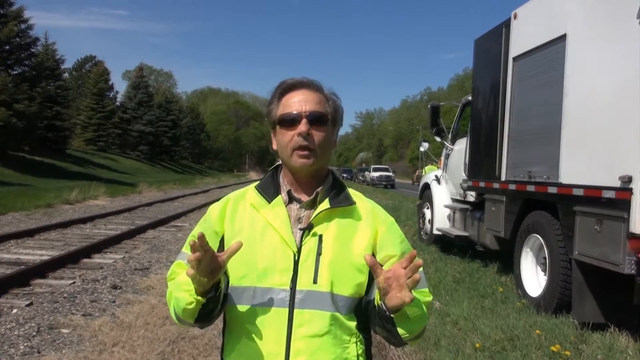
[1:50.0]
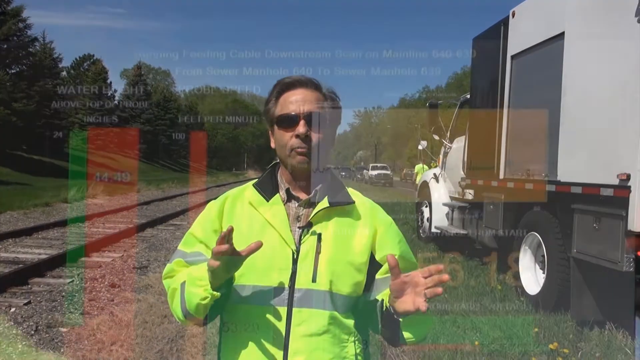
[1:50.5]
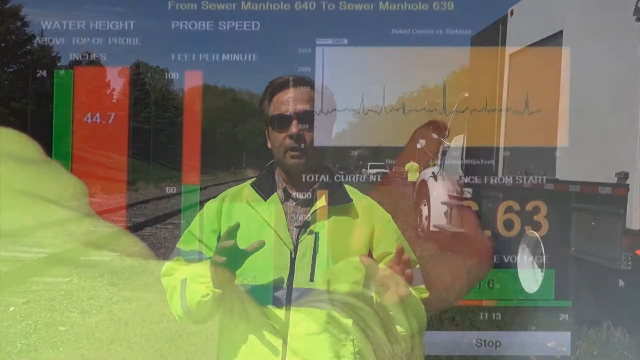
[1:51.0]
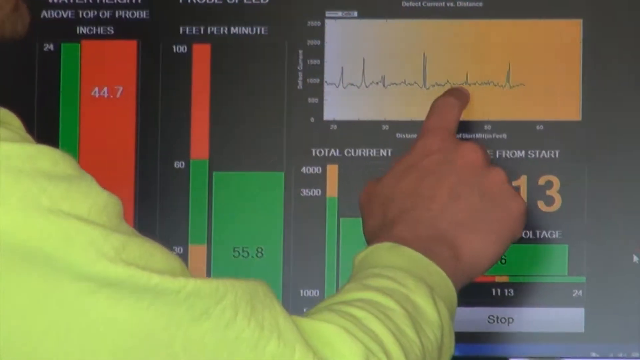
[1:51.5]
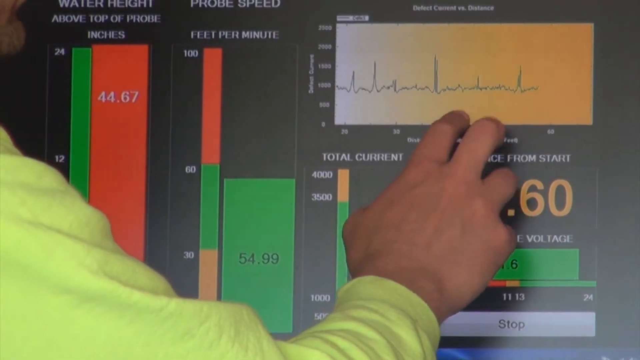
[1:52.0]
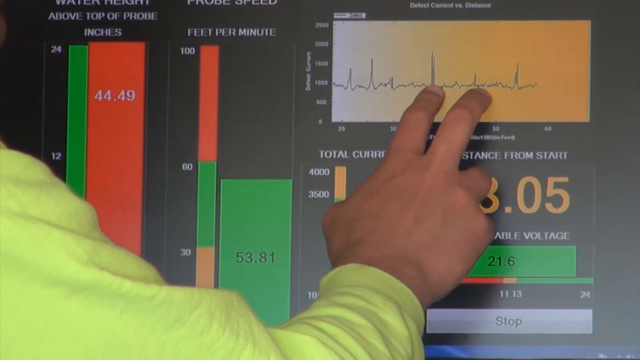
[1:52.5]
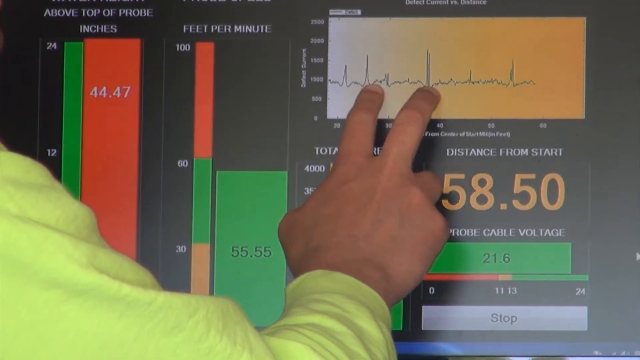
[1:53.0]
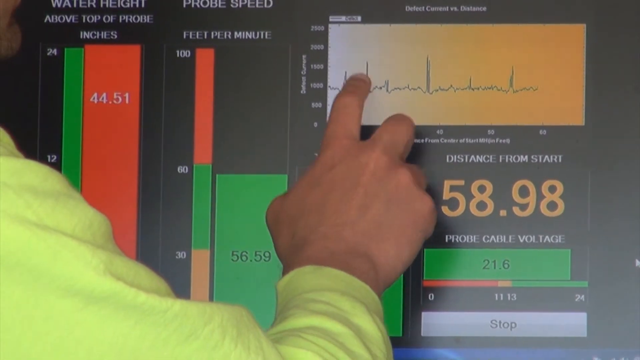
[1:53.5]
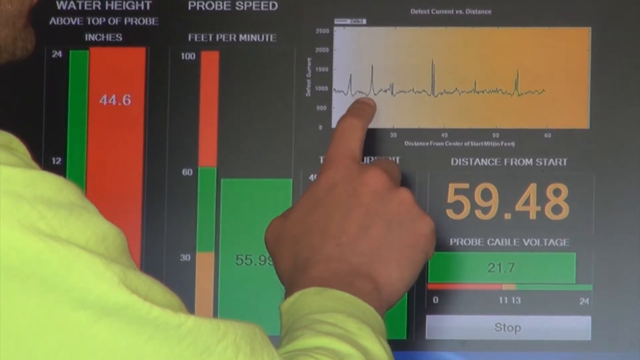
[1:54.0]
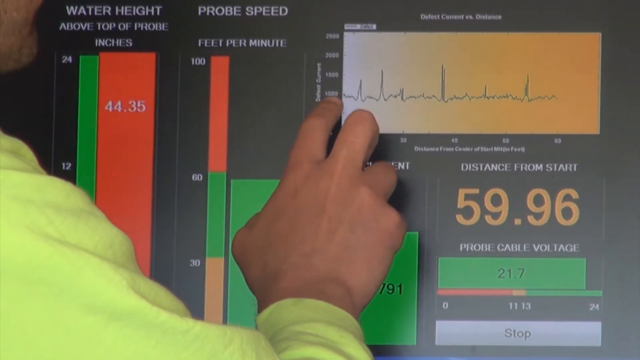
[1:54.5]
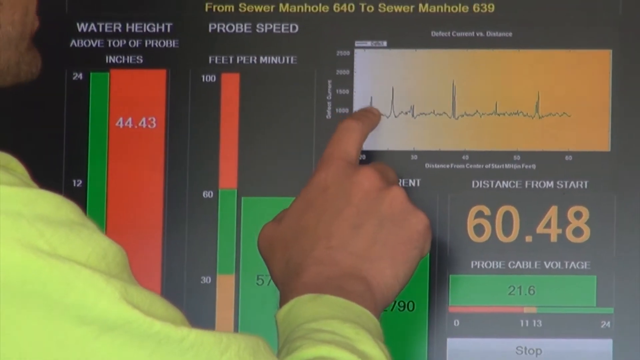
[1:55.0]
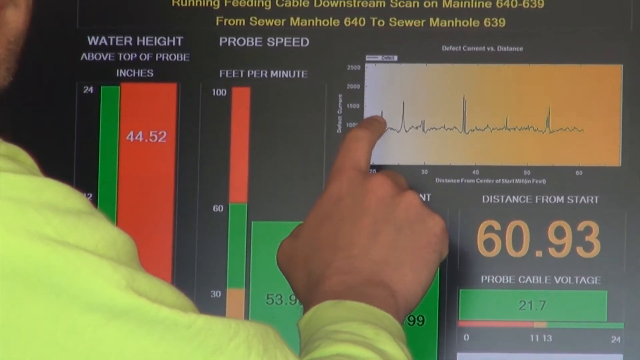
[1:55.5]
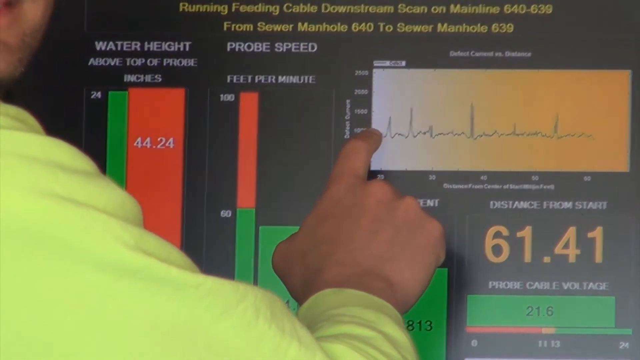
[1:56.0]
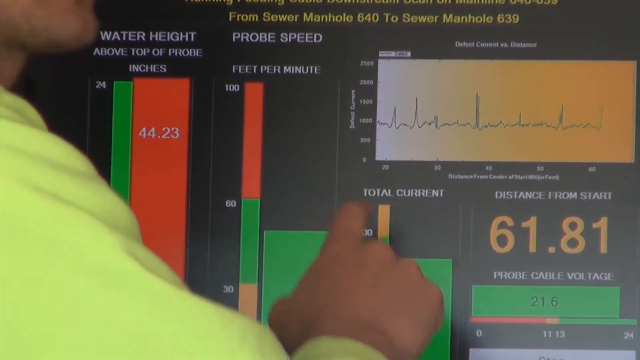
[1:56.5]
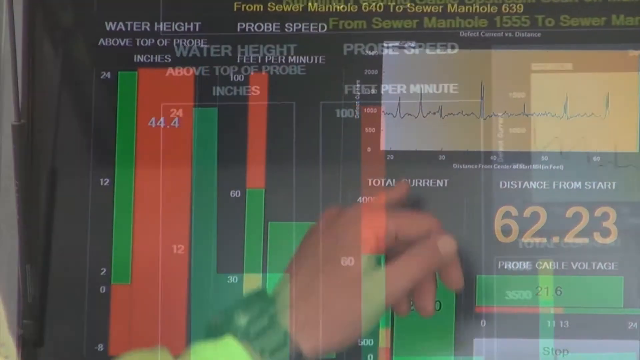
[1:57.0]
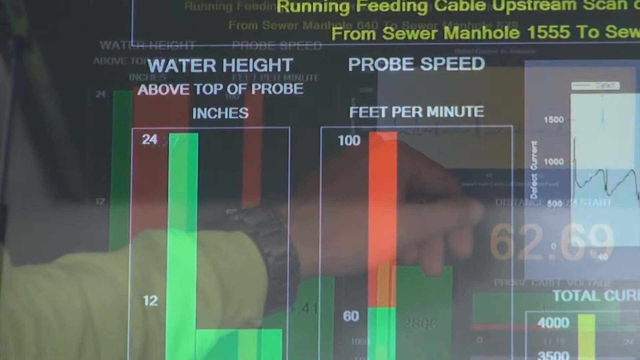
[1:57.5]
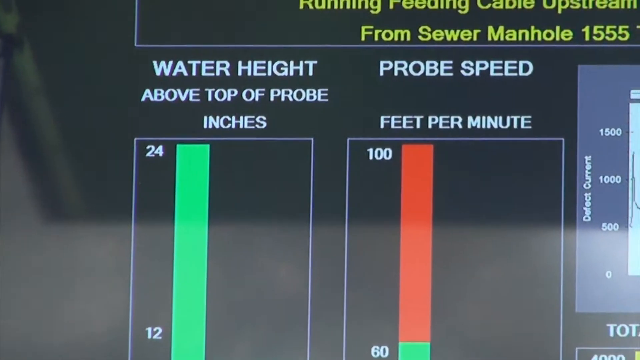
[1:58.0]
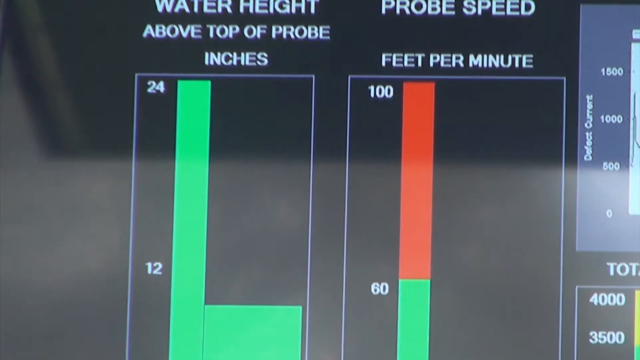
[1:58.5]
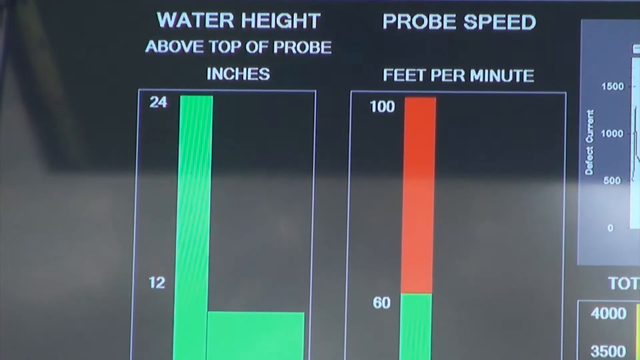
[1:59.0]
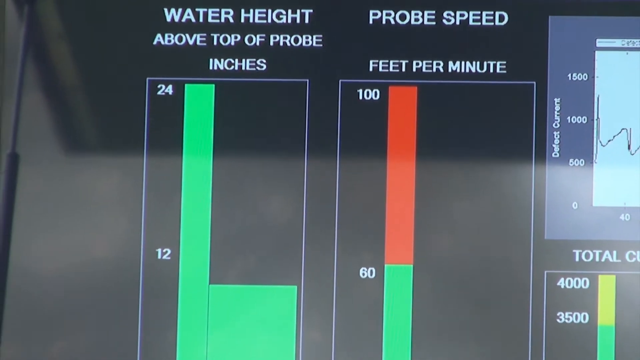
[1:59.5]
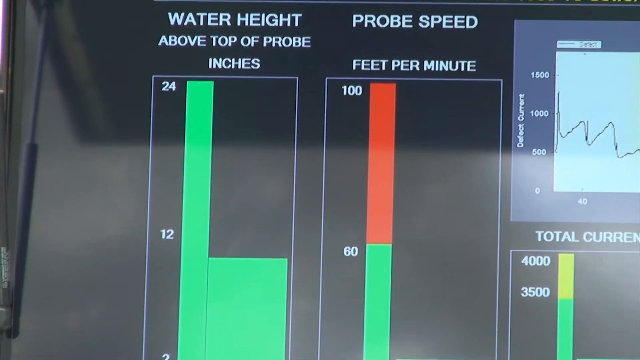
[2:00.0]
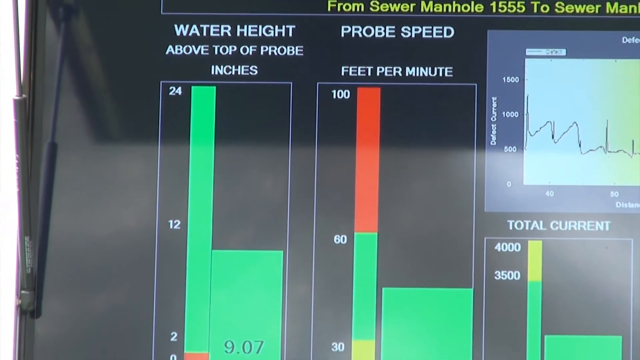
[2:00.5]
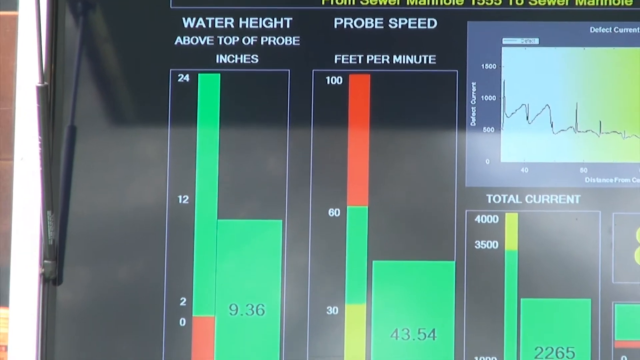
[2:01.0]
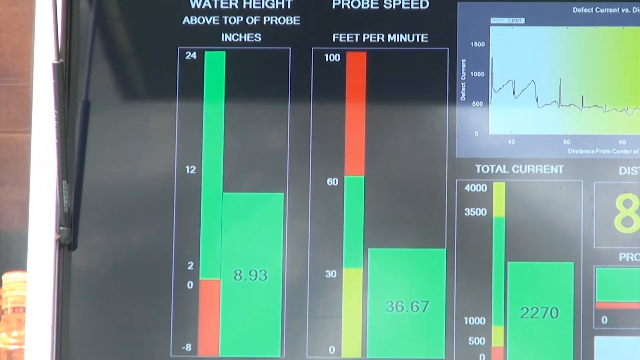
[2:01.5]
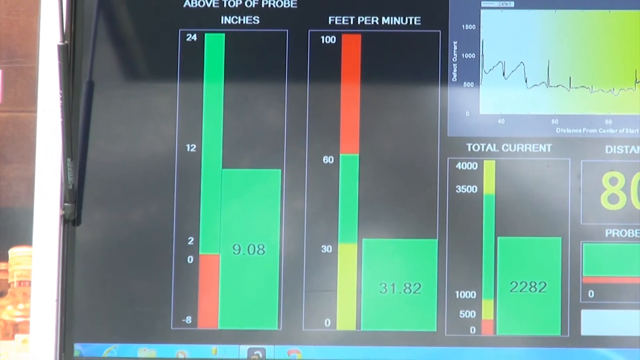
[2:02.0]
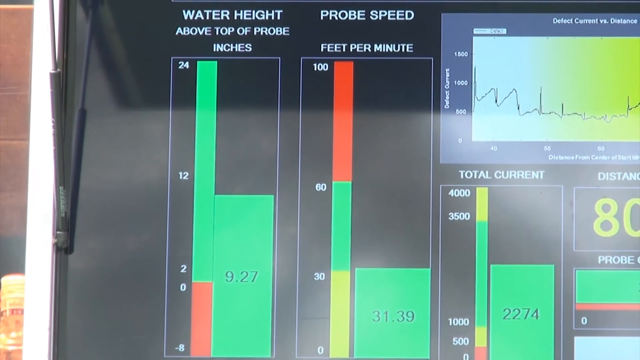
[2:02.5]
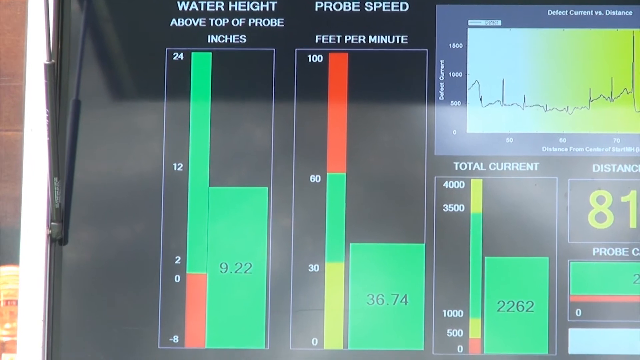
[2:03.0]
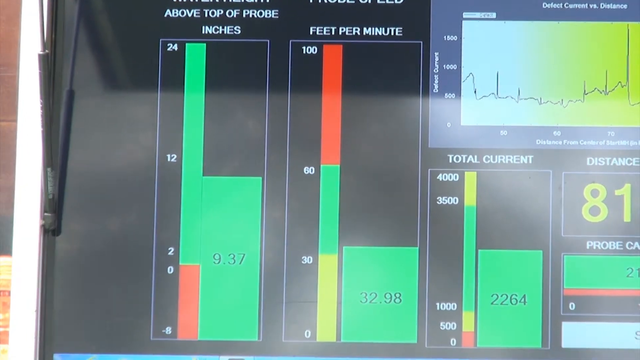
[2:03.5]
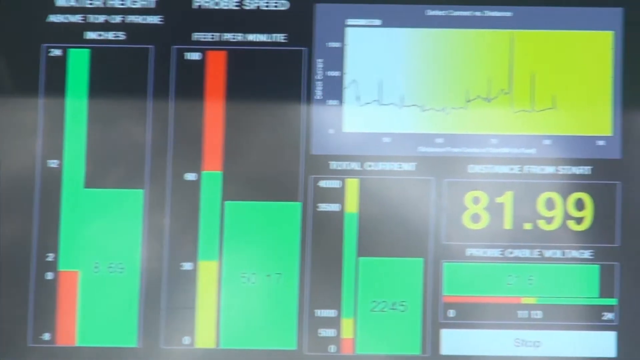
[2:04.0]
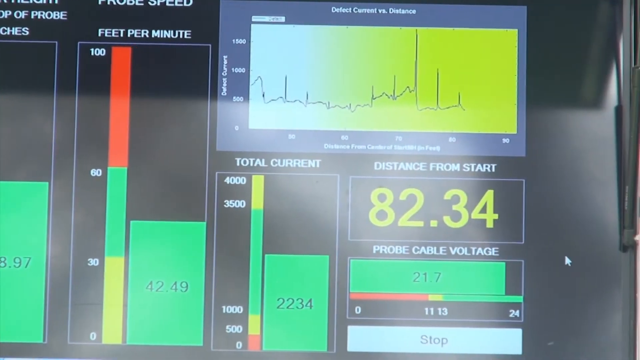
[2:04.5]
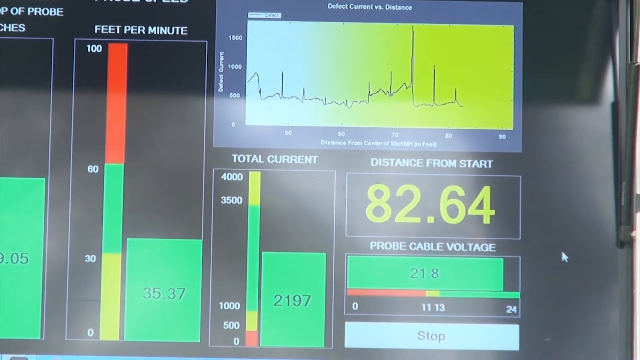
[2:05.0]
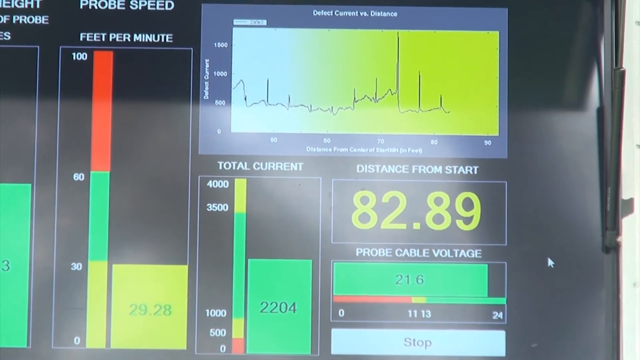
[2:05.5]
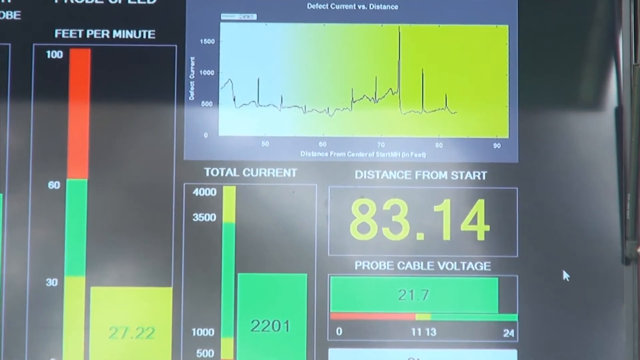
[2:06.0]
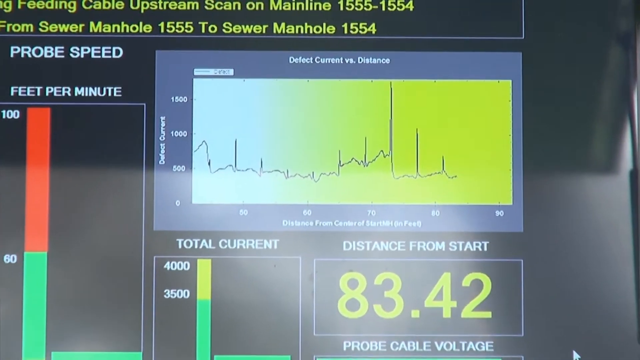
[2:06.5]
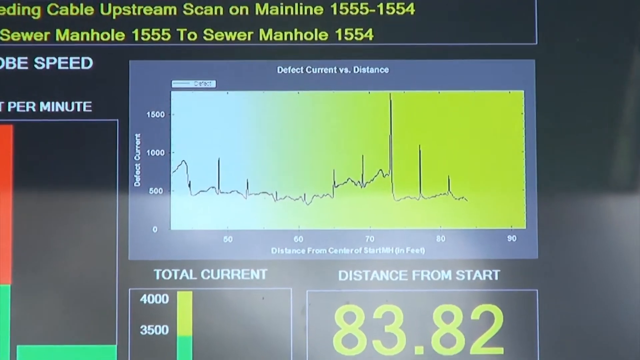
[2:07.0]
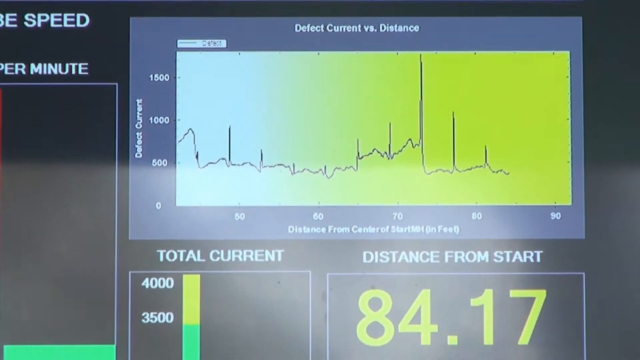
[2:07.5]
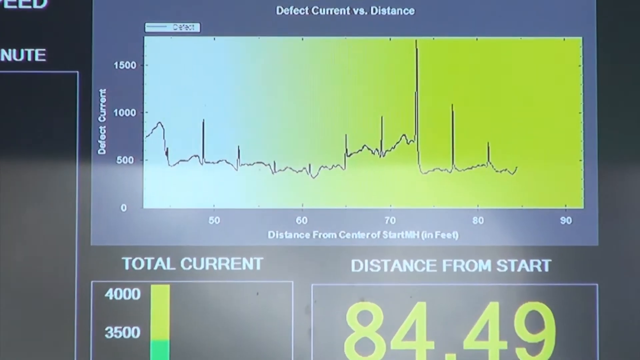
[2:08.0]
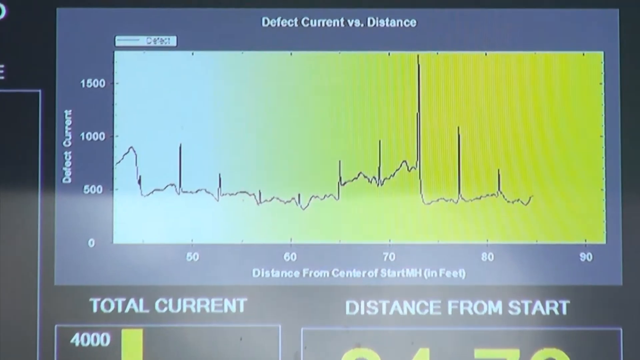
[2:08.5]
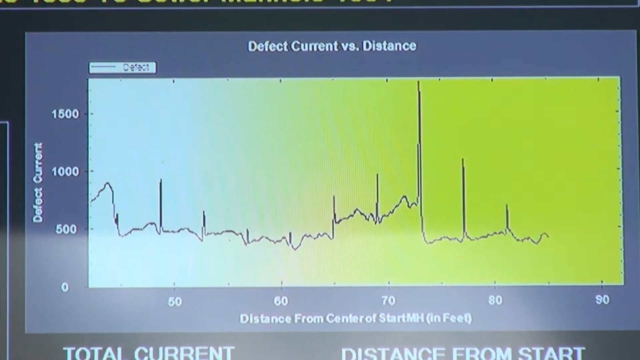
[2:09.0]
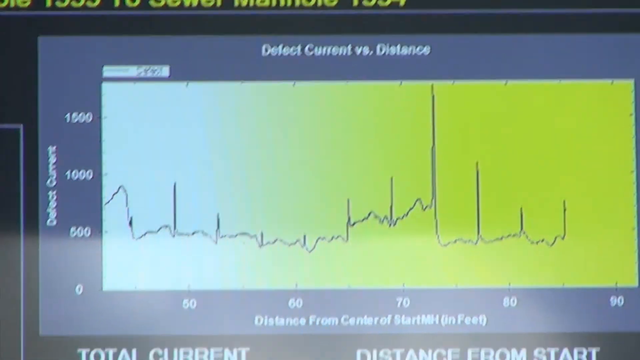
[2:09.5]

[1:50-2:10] Mr. Tracy, in a neon jacket, talks to the camera under blue skies with green trees everywhere, along the railroad tracks, with a road to the right and trucks to his left and right. A computer graph then appears with sine waves that almost look like a heartbeat, used for monitoring something in the sewer. It shows readings including feet per minute, probe speed, voltage, probe cable voltage, water height, top probe in inches, distance, distance from start and current. Mr. Tracy is also seen speaking. The grass is green, the trees are full of green leaves, and there are a few wispy clouds.